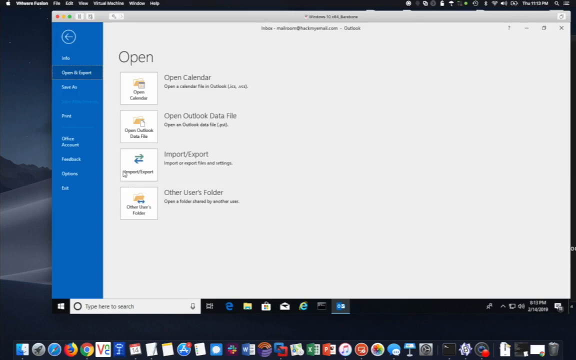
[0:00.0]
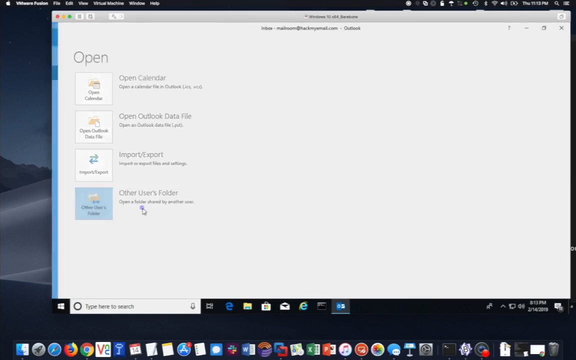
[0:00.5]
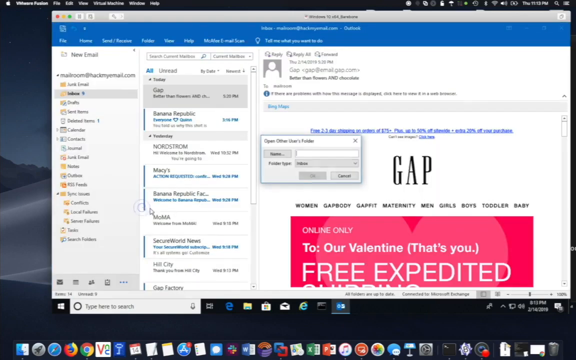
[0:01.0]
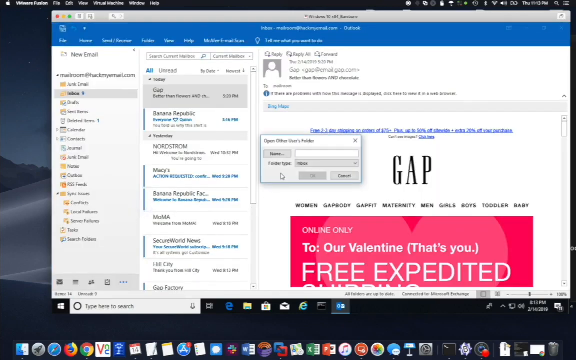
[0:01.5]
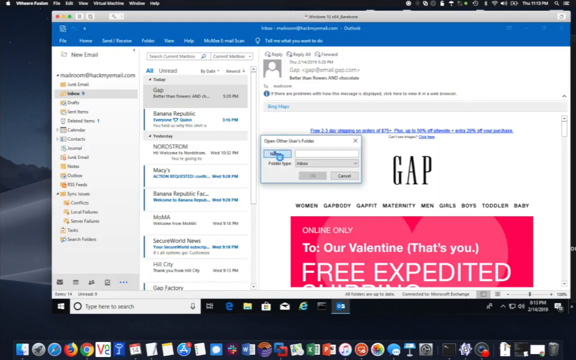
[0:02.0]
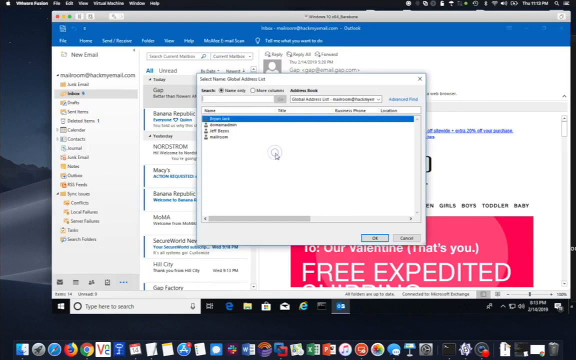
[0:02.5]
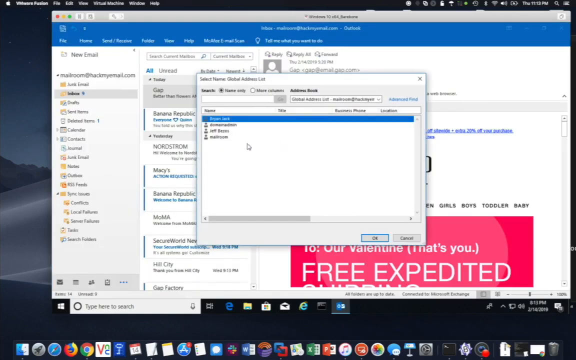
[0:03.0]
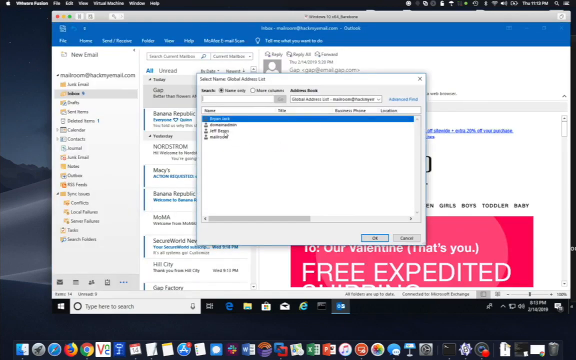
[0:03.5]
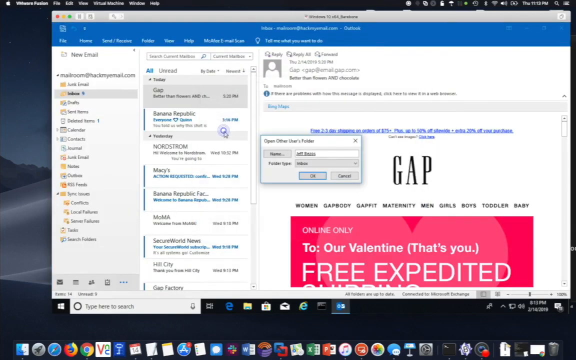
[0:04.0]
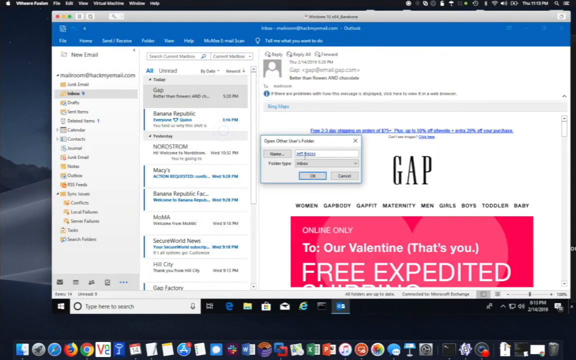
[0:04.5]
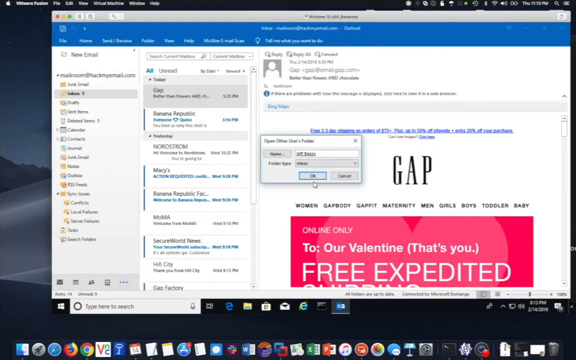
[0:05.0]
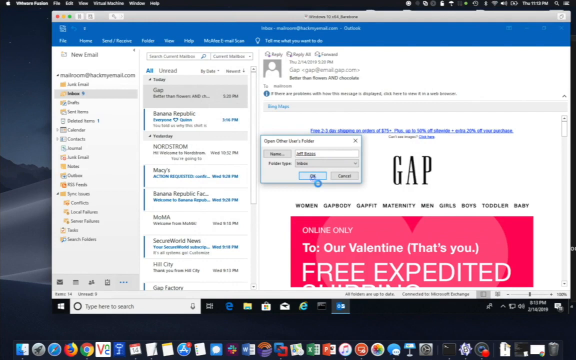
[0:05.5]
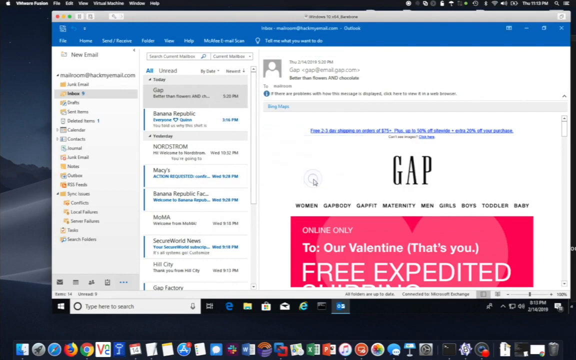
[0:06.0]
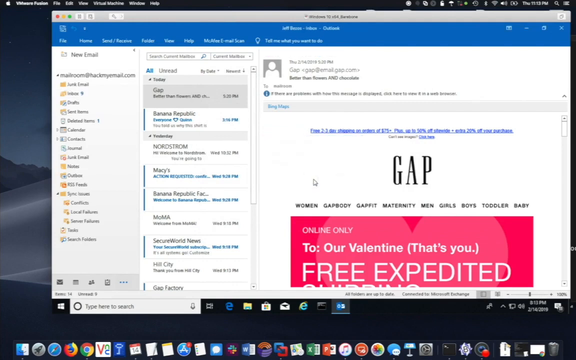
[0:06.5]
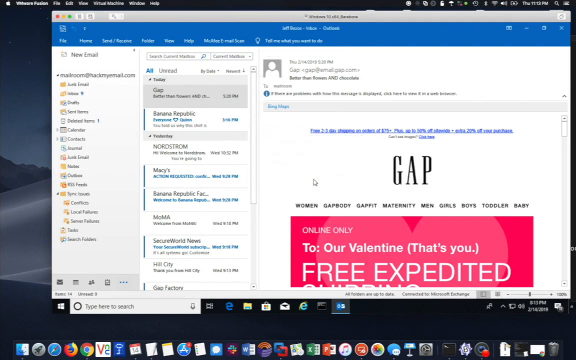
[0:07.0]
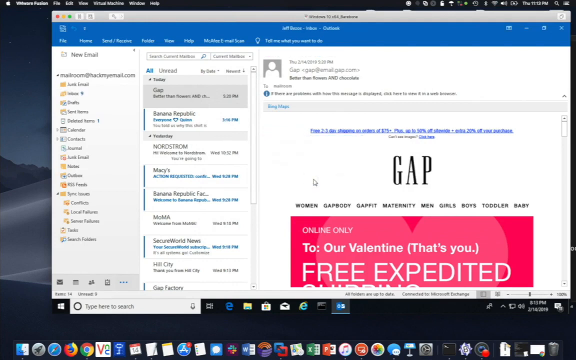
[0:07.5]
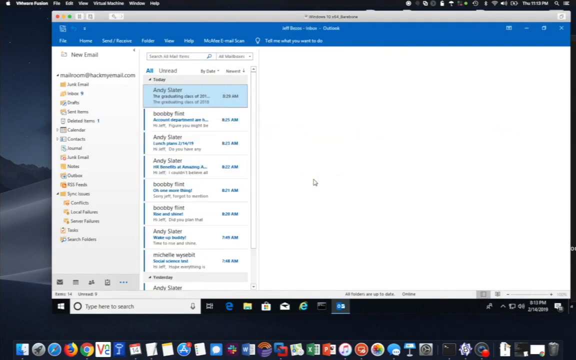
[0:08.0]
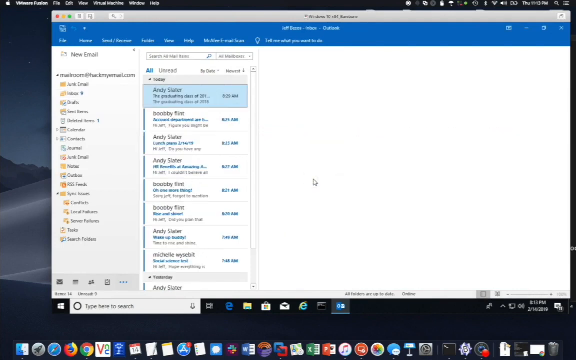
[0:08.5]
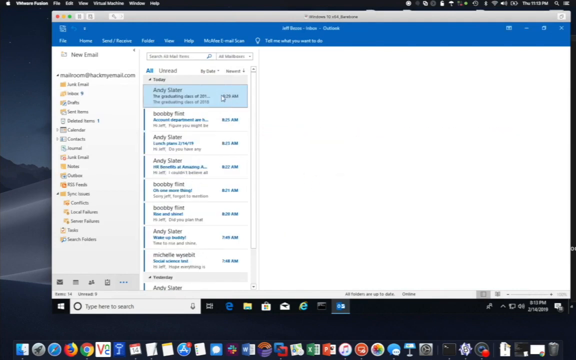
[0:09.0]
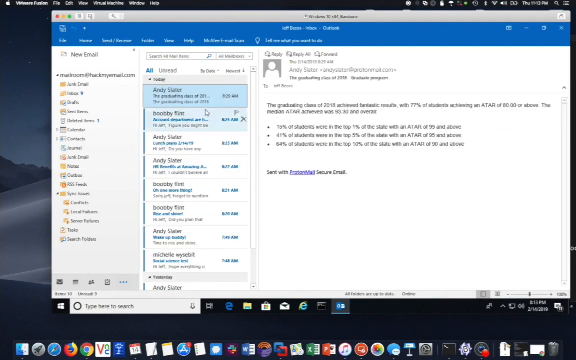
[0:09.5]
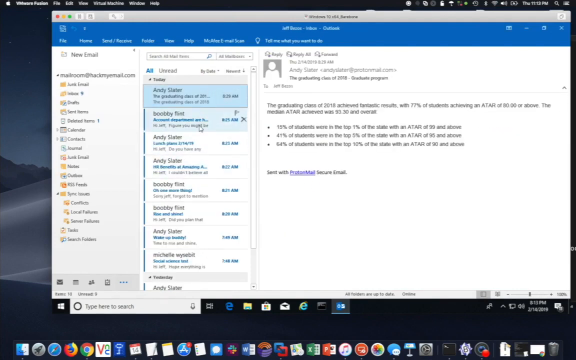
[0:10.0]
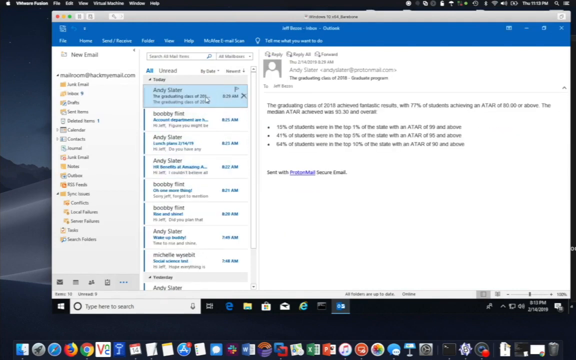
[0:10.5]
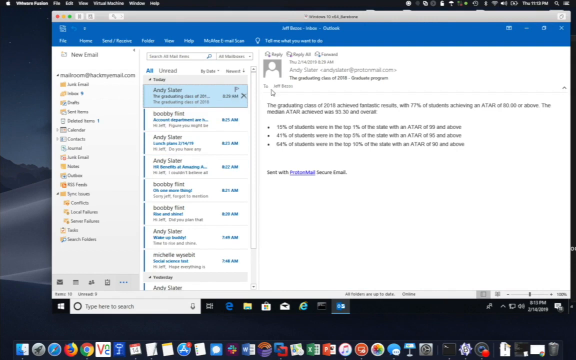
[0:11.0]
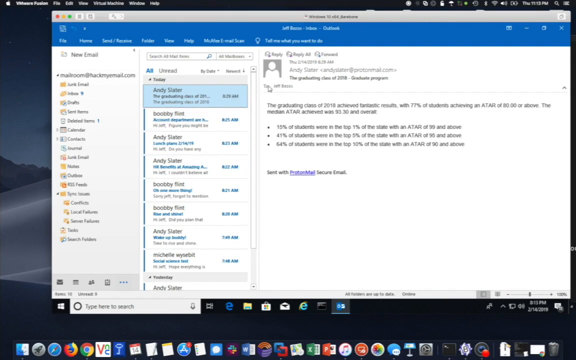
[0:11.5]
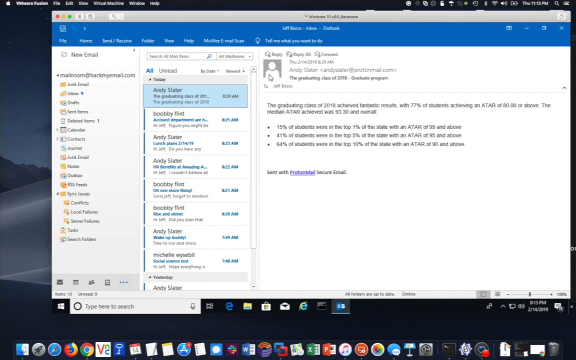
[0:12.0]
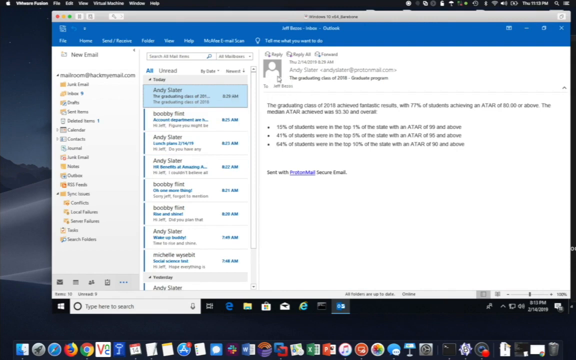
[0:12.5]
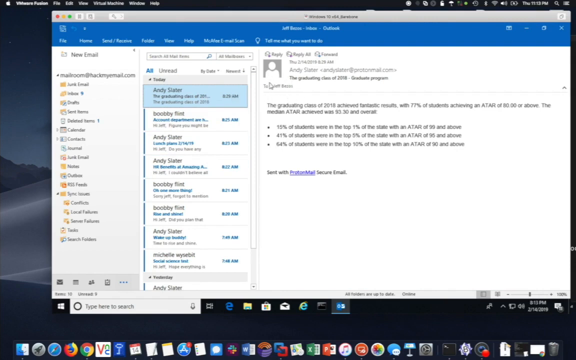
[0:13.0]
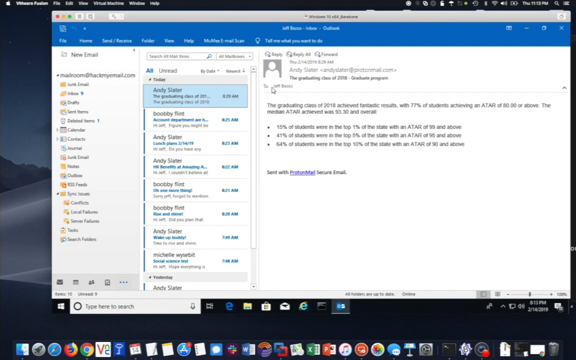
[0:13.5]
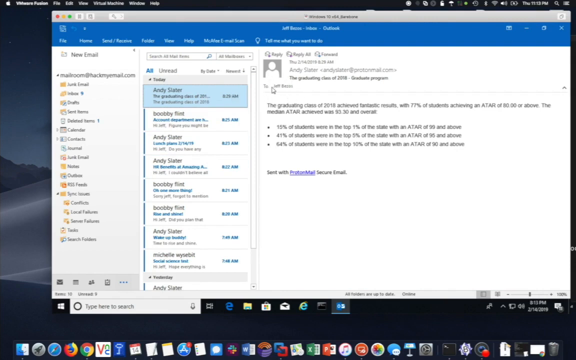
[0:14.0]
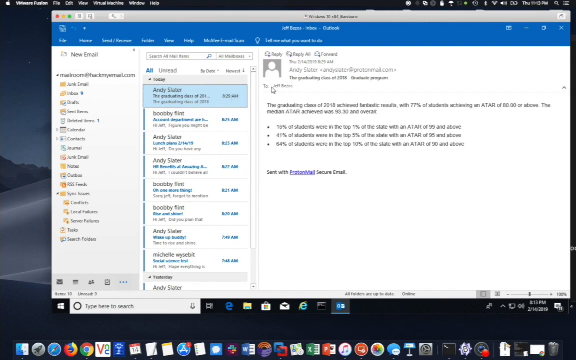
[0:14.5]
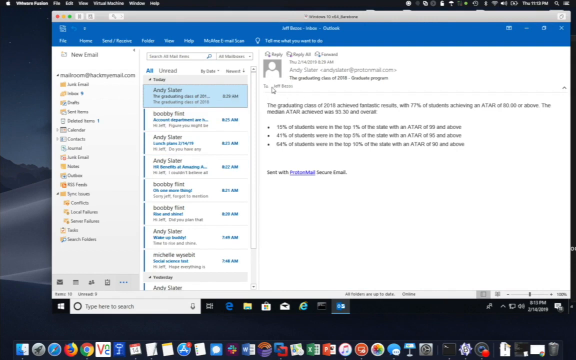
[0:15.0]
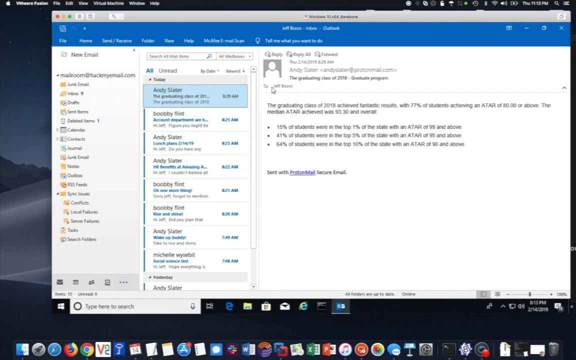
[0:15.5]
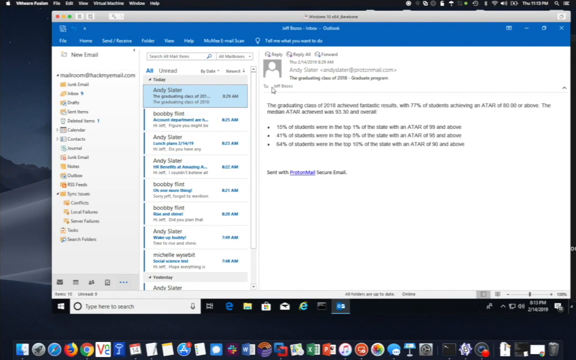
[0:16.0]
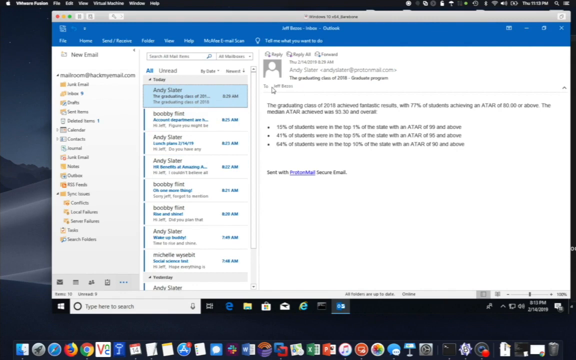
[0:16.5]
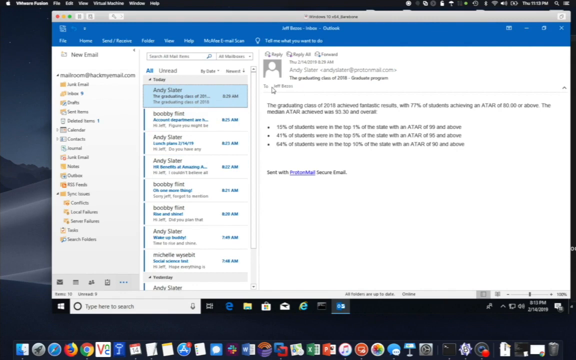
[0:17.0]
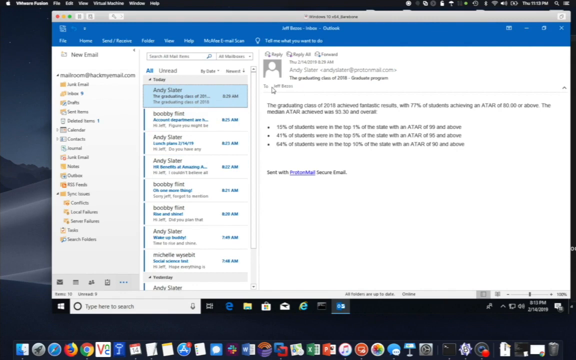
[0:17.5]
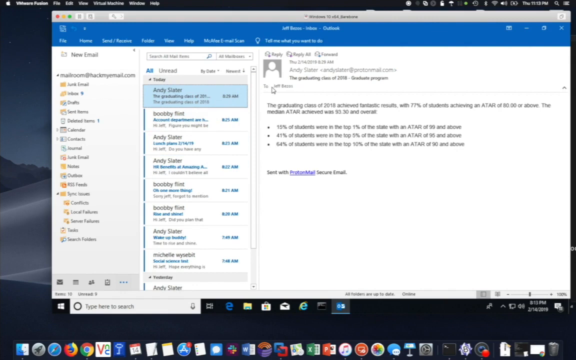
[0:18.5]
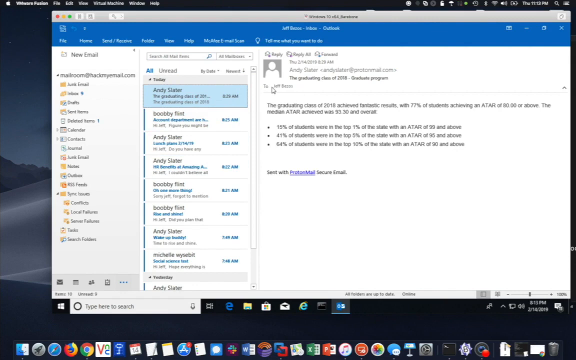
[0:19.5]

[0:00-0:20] Someone opens and looks through their emails in Outlook. At first a screen shows four choices: open calendar, open Outlook data file, import/export, or other user's folder. They click on other user's folder, and the screen opens to what looks like an email page. The first email, highlighted and open, is from the Gap store and offers a Valentine's special. In the center of the screen a box appears that says "open other user's folder," and the cursor clicks a button next to the text box. Another, smaller screen appears; its writing is very small, making the choices in the drop-down menu difficult to see, but the cursor highlights the third one from the top and a name appears in the text box of the original small box. The cursor clicks OK and the smaller box disappears. They then switch to a different folder within the email, which has a different list of emails; the top one, highlighted, is from someone named Andy Slater.